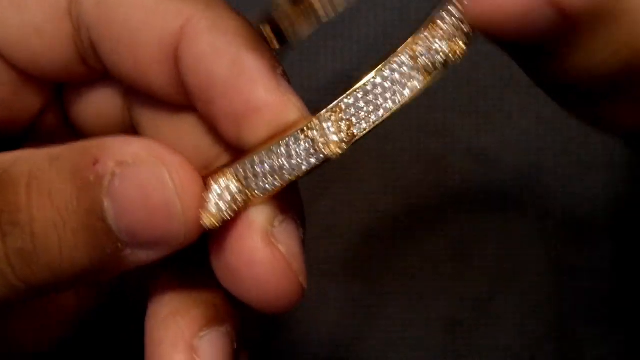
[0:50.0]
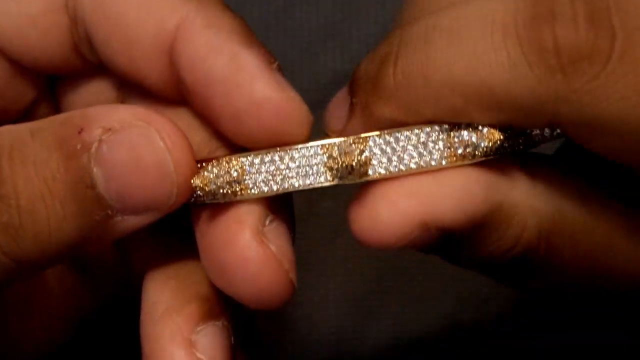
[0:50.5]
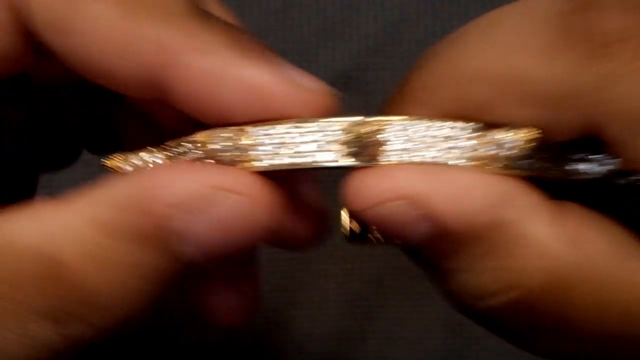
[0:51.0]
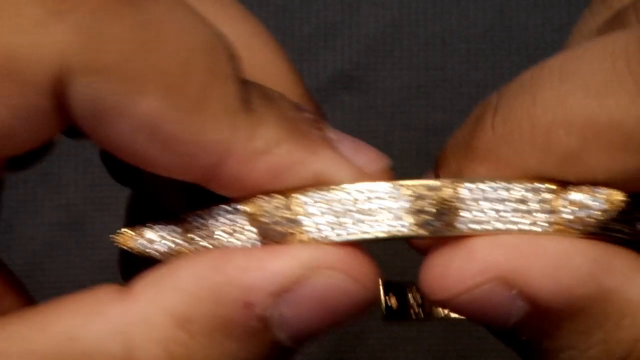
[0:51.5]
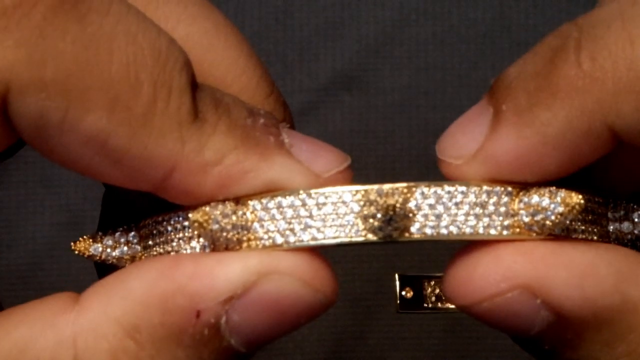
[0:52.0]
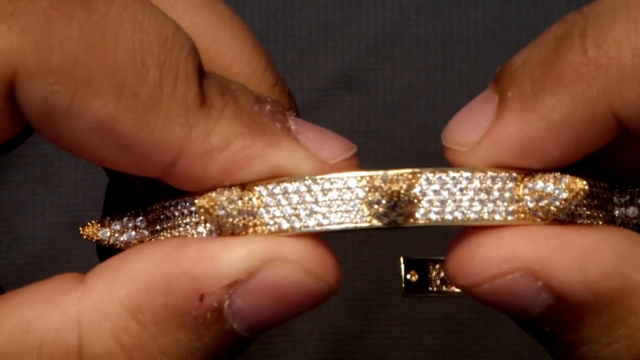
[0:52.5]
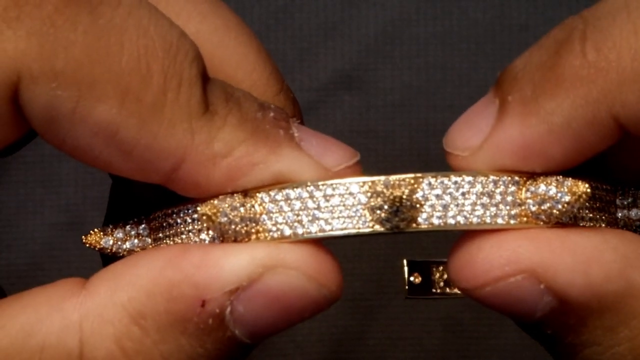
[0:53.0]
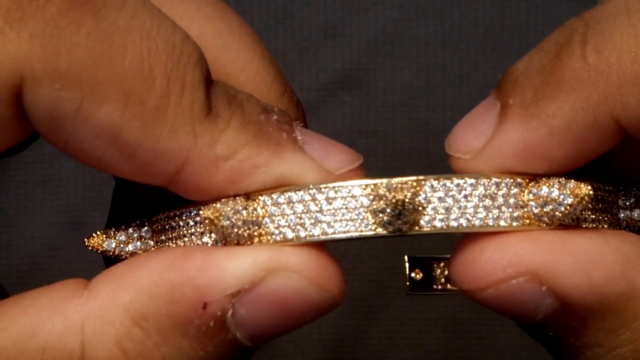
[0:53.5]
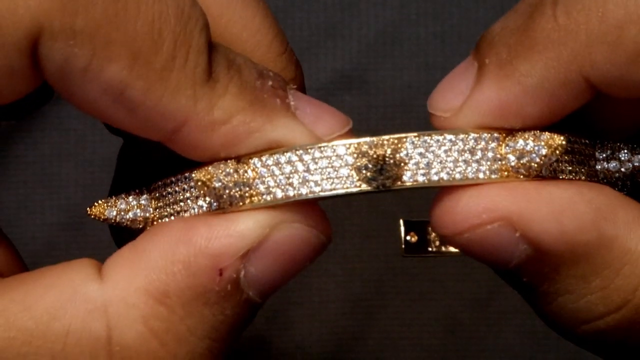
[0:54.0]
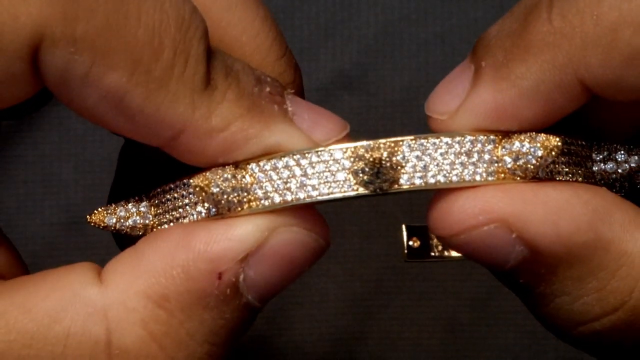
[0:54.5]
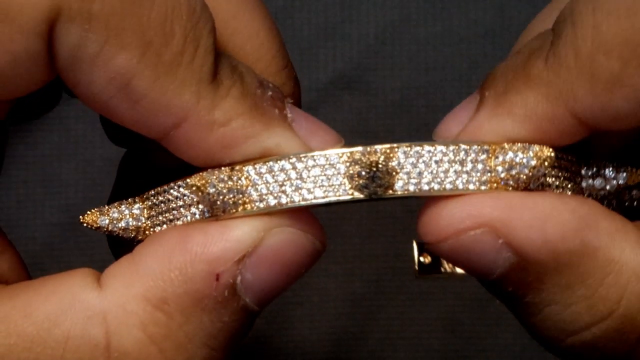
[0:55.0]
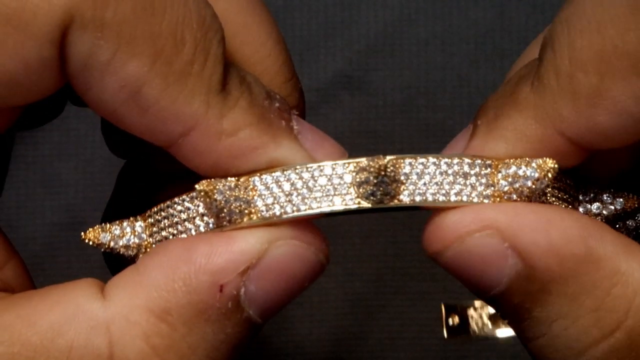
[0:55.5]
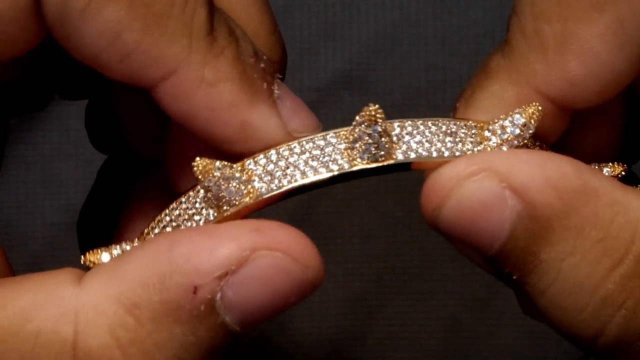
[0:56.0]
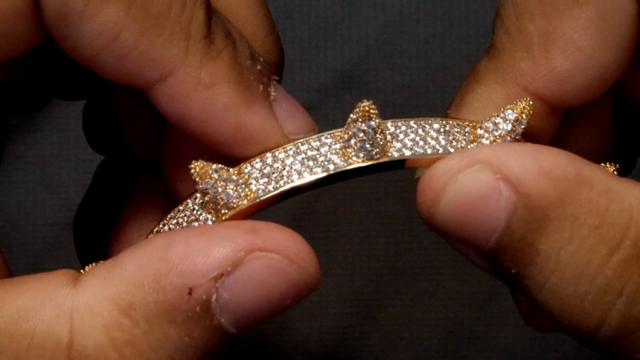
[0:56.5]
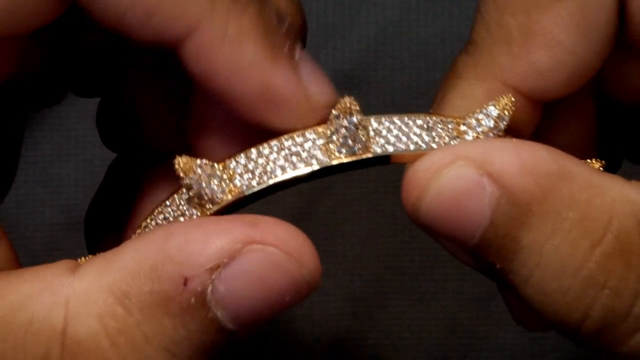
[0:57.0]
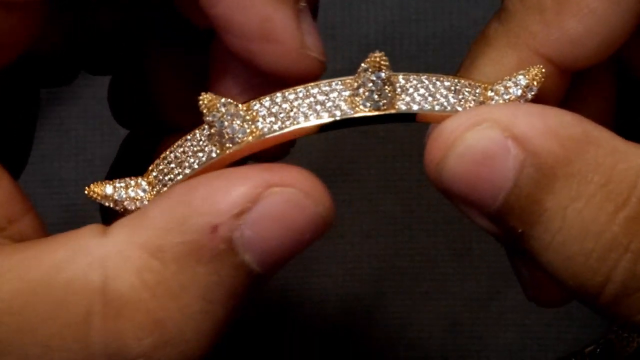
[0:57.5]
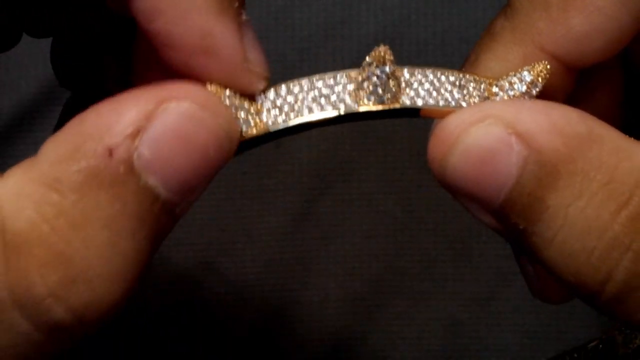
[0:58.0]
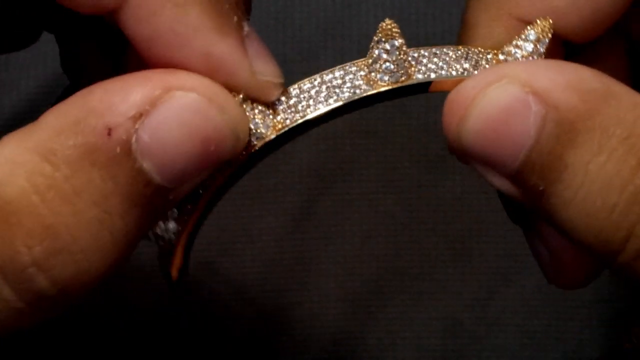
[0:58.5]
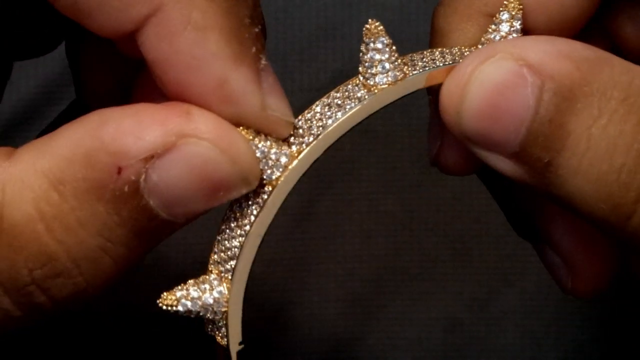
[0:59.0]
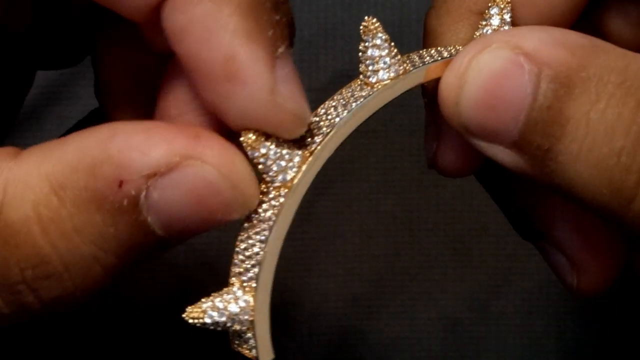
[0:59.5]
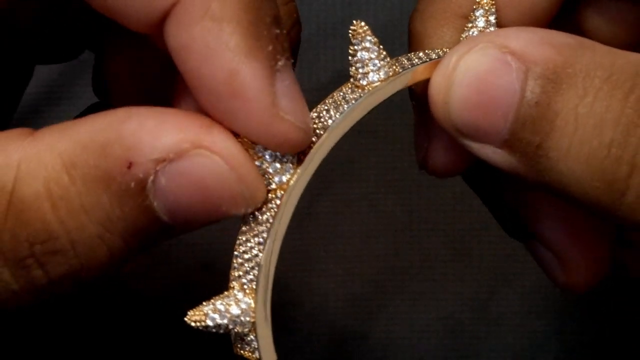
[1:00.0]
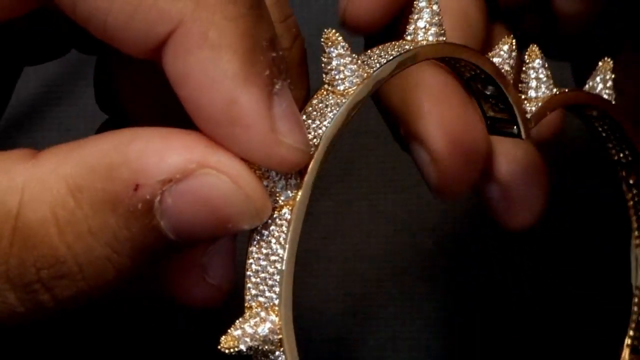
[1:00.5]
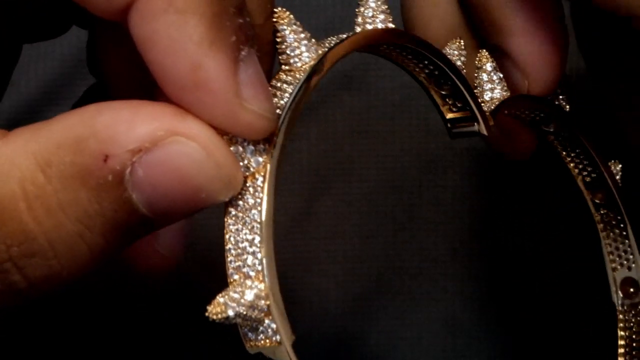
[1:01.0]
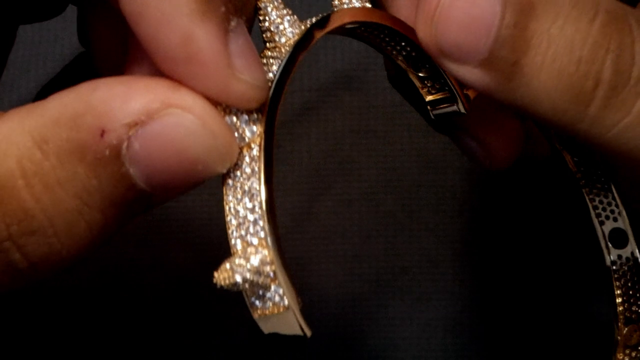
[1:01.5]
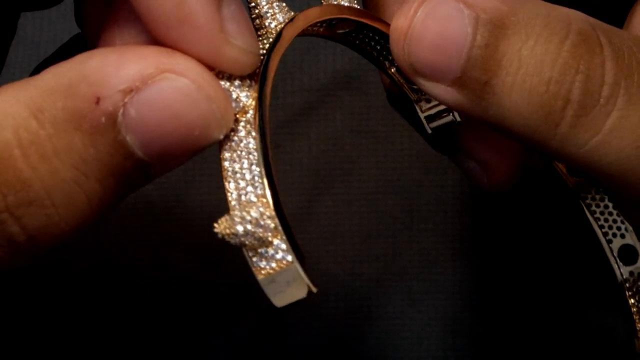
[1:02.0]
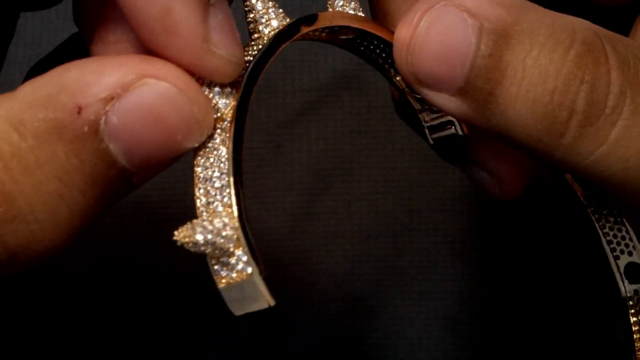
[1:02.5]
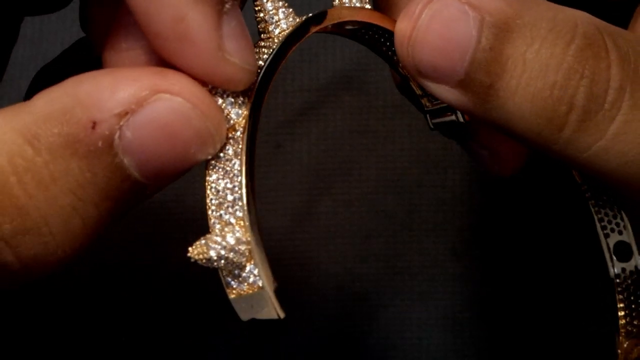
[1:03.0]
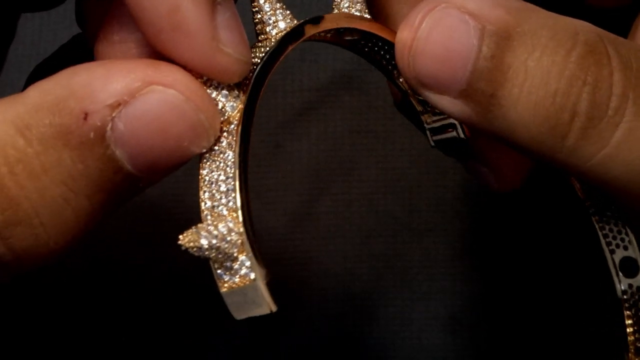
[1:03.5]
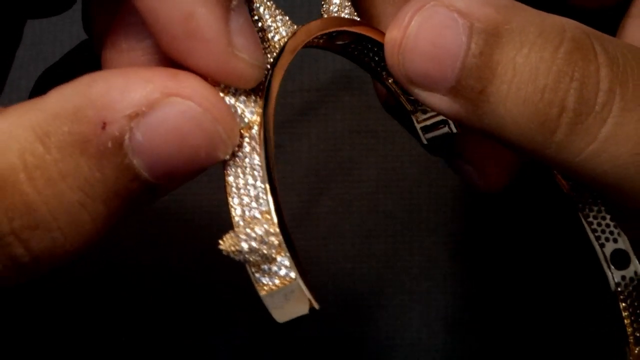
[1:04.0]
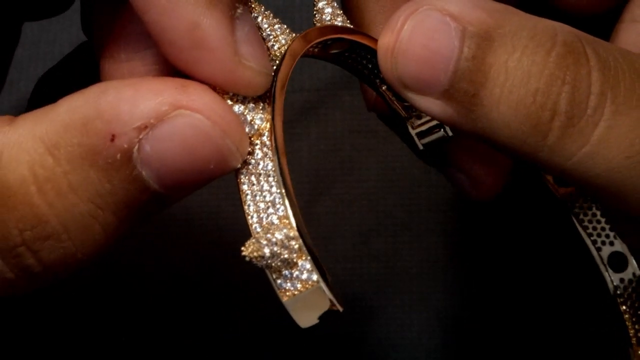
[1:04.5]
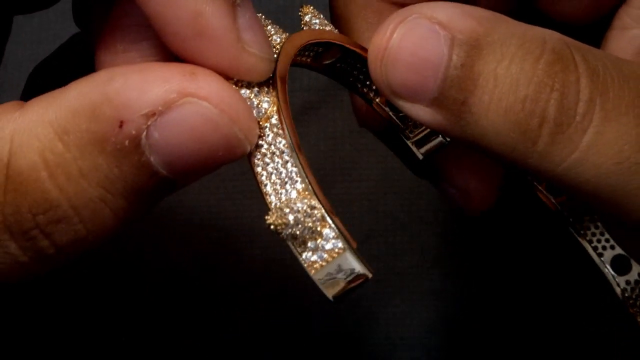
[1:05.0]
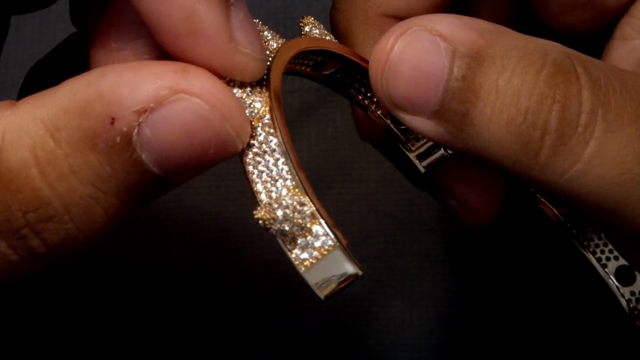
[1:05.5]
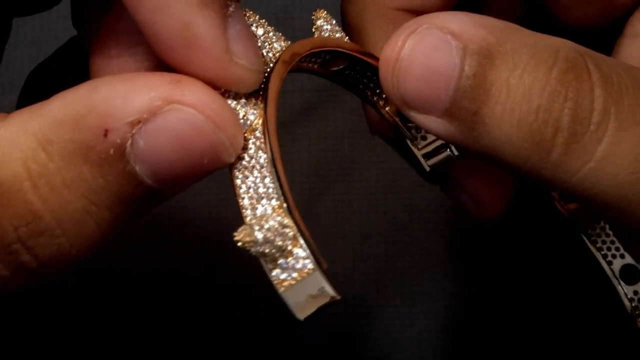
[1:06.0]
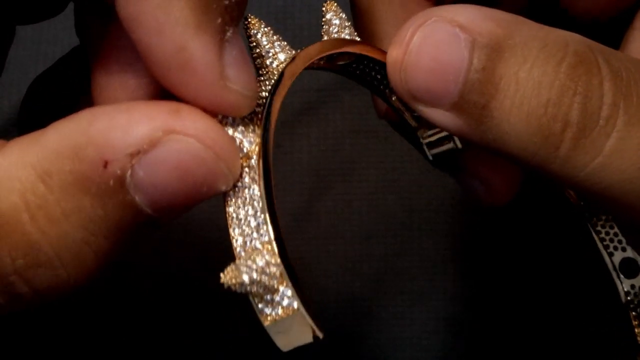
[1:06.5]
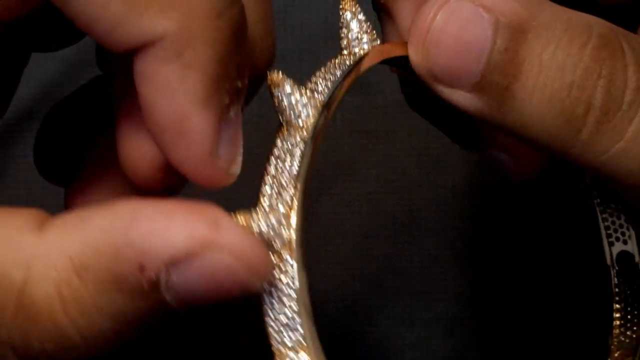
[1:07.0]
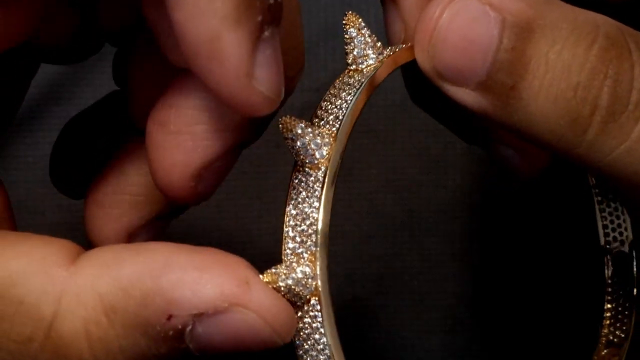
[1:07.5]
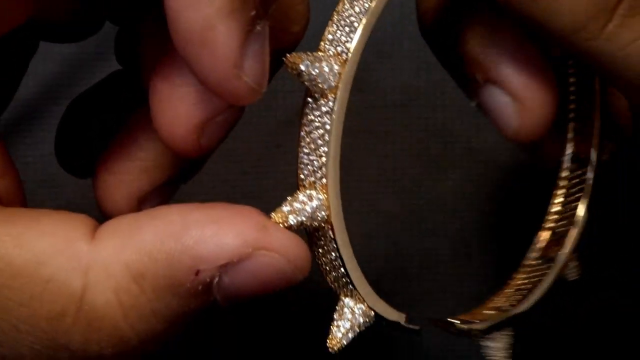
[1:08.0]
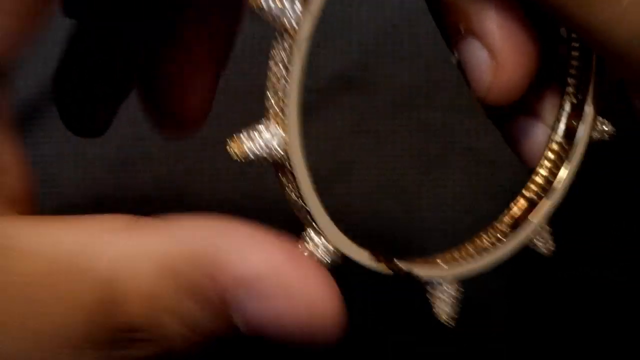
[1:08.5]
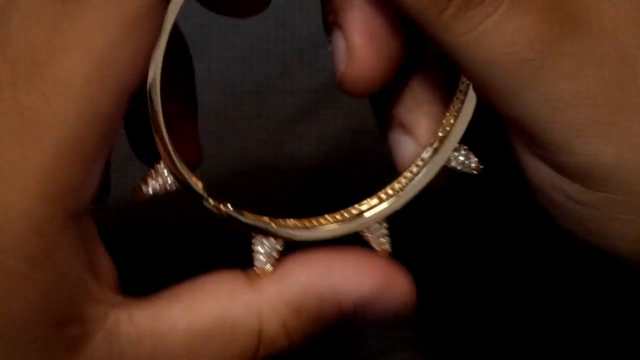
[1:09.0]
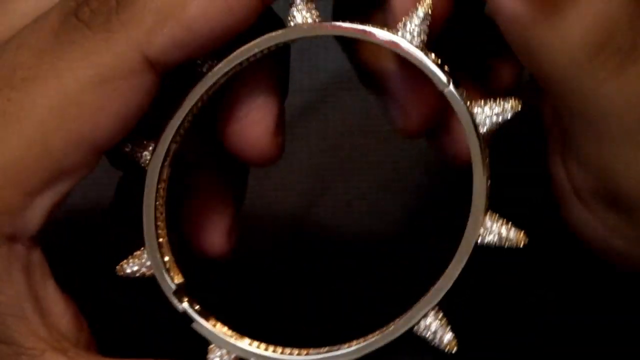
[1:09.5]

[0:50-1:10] He shows the wristband, which has gold and diamonds and is very shiny. The hand is a man's hand with short nails, and something on one of his fingers looks wounded. The hand shows different parts of the wristband with the gold and diamonds.